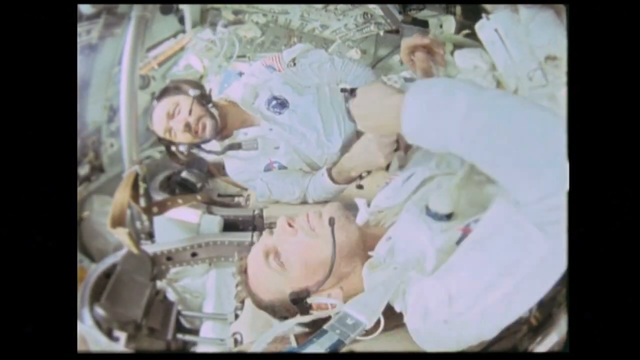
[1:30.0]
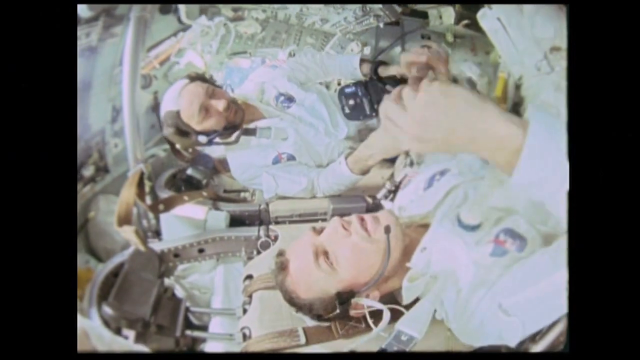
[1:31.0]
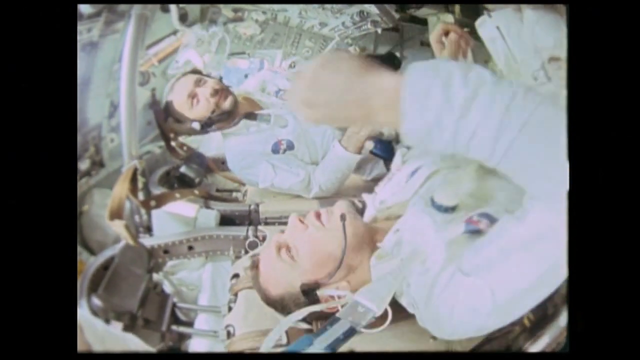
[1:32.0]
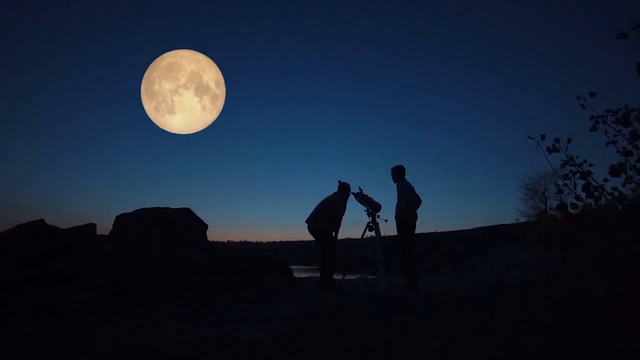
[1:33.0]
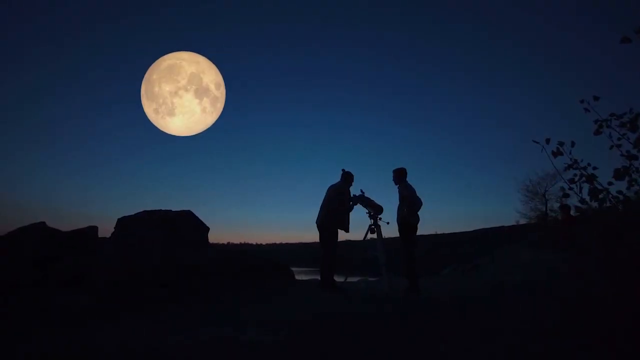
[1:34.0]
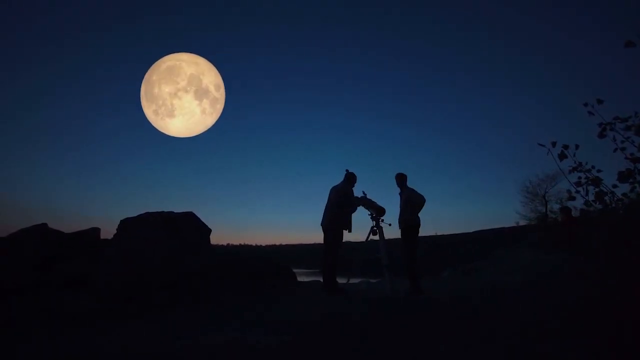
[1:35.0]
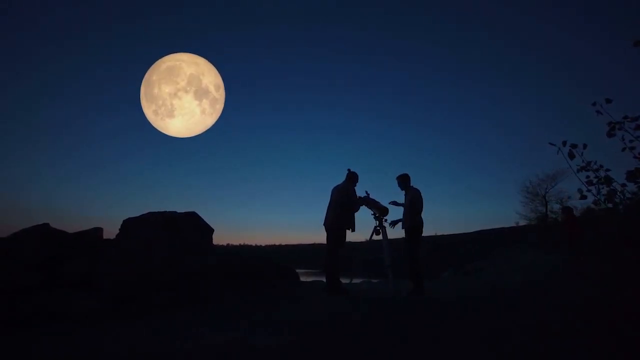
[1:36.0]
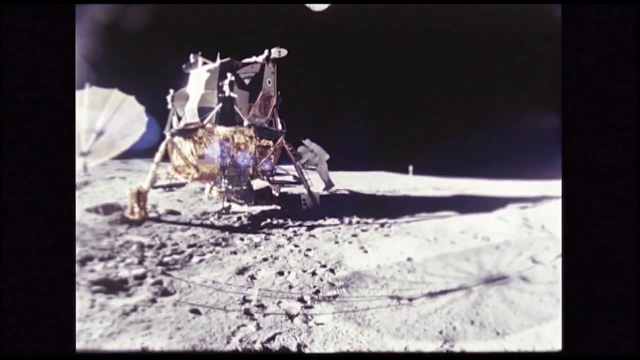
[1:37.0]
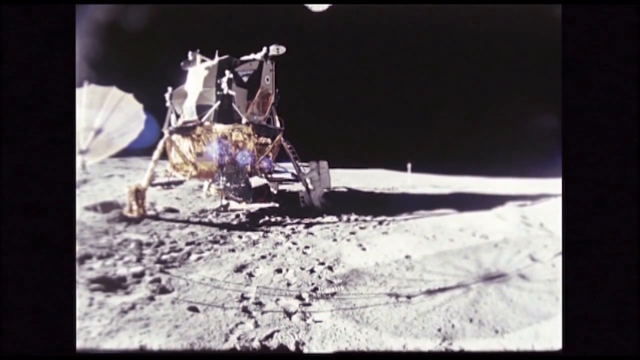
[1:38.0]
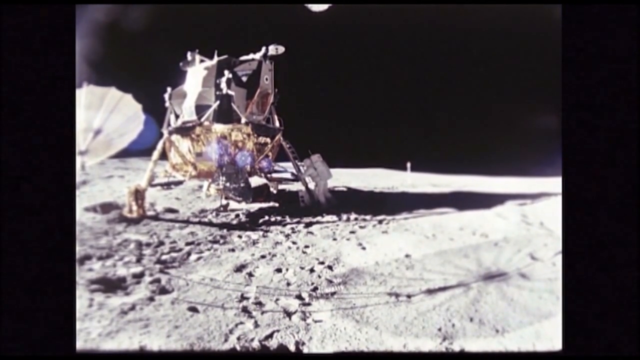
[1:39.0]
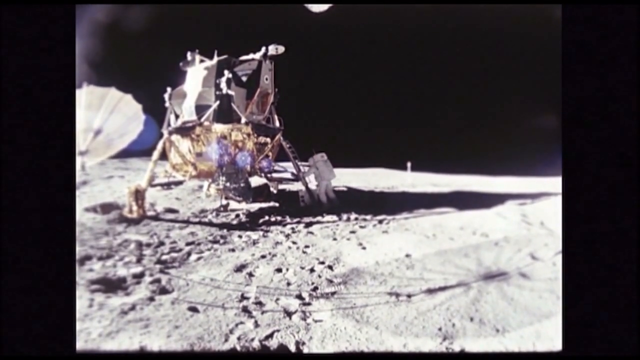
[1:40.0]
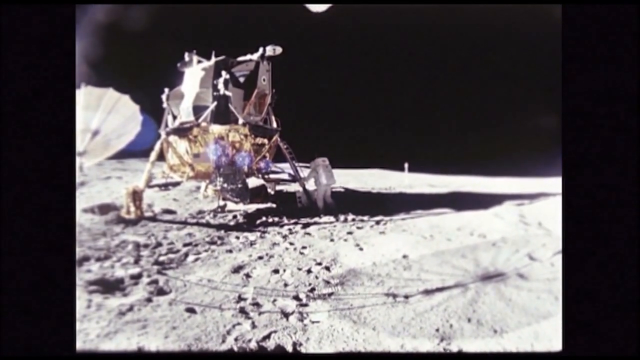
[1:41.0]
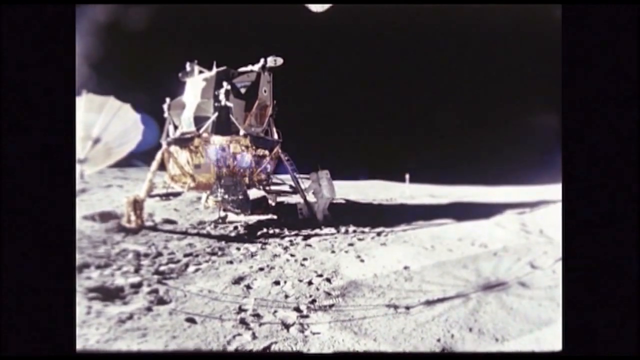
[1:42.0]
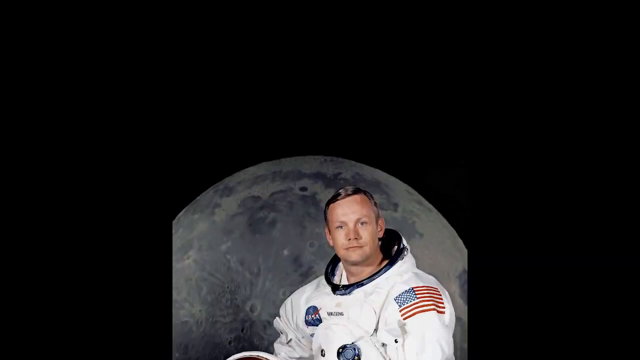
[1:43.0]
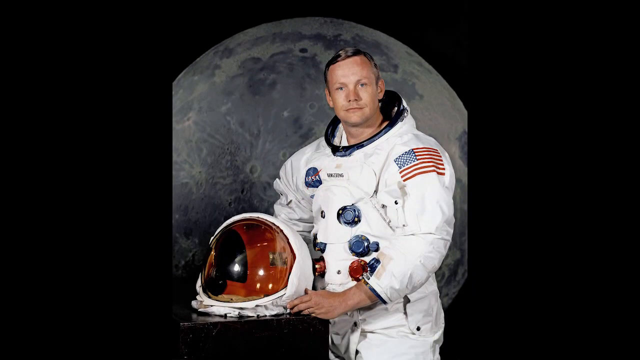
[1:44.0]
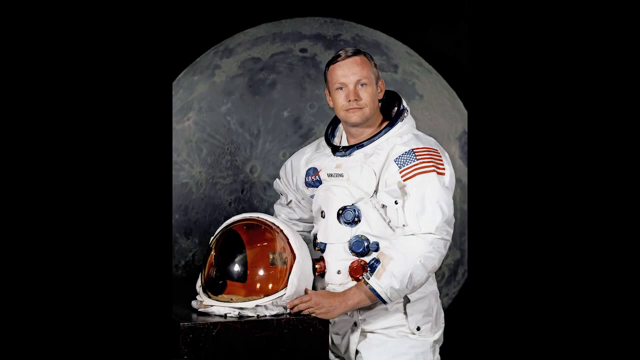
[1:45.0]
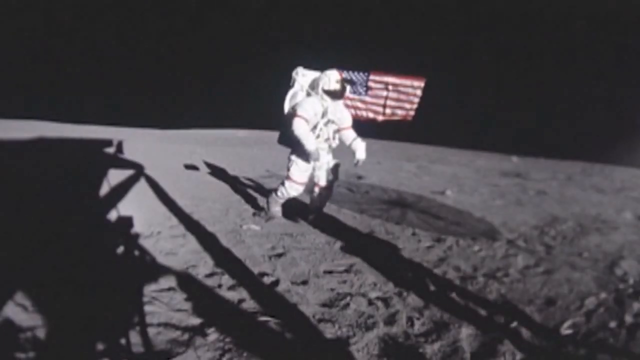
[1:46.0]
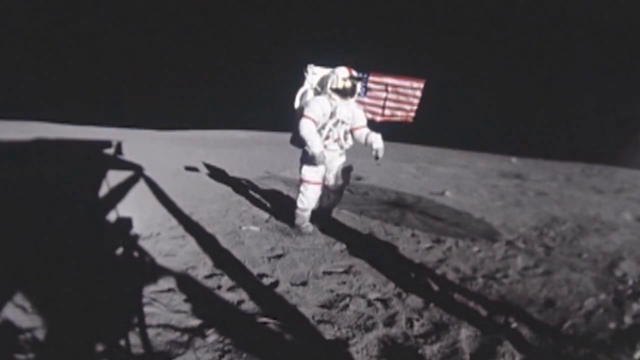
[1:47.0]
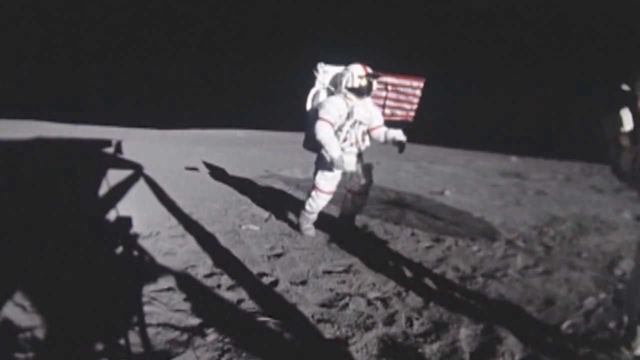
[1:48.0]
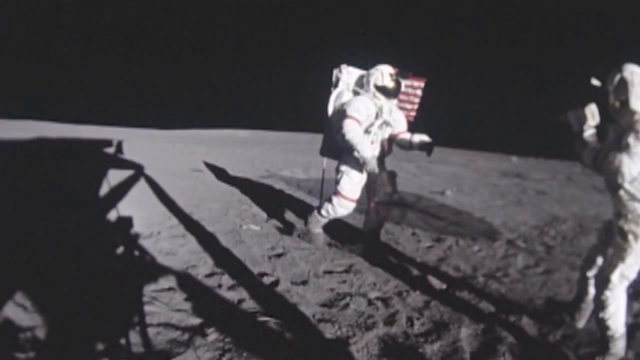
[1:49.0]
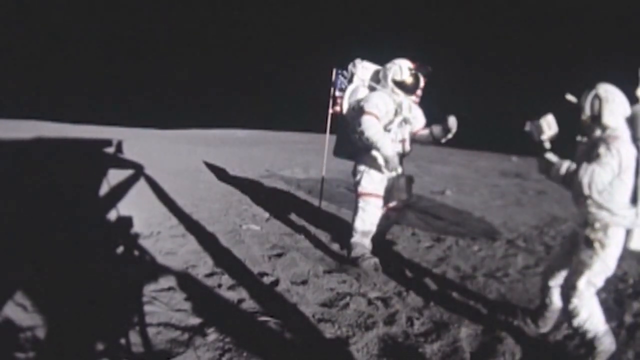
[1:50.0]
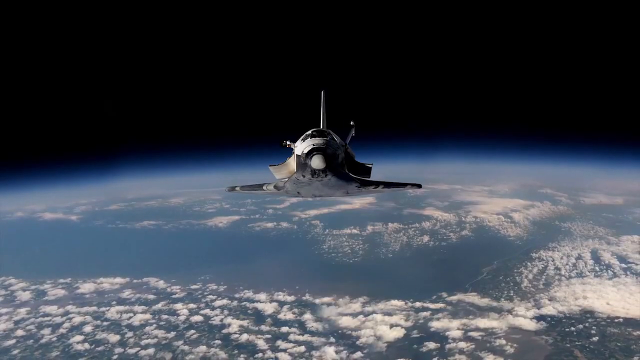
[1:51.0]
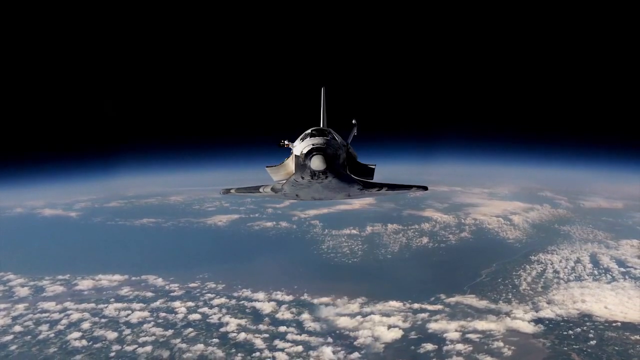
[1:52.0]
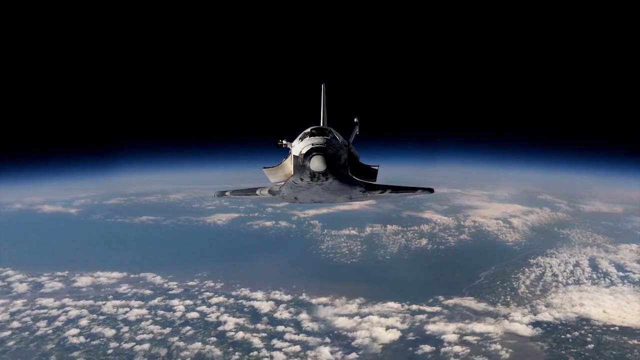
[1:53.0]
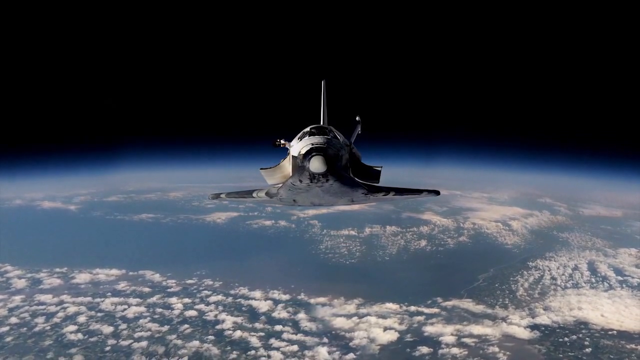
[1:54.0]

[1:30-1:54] The two men are in the spacecraft. The one farther back holds the large camera on the stick and faces the man closer to the camera, who looks at the camera, eats a snack, and then kind of moves his arm over to grab something. It then cuts to two people in the countryside with a large telescope and a large full moon in the sky. It looks to be nighttime just after sunset, with a faint line of the sun, a little bit of orange at the horizon, and a bit of a house in the background. It then cuts to a very grainy image of a man stepping out of a structure on the moon; this image also seems to fit one of the old square TVs, and the man climbs down the ladder. Later there is a still image of a man in an astronaut suit with his helmet to his right side and the moon photoshopped in the background. Another grainy image shows two astronauts on the moon floating around, and then a spacecraft points toward the viewer.